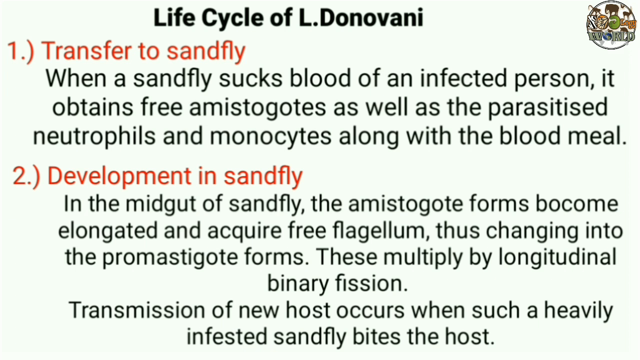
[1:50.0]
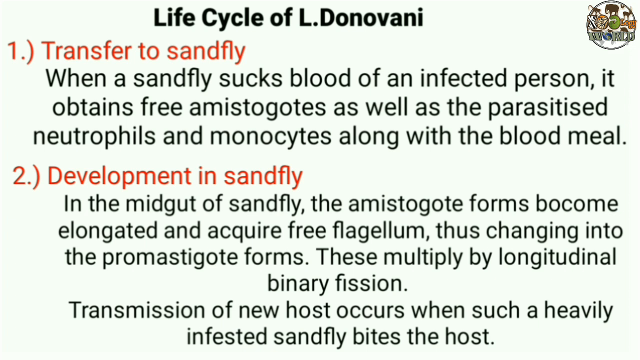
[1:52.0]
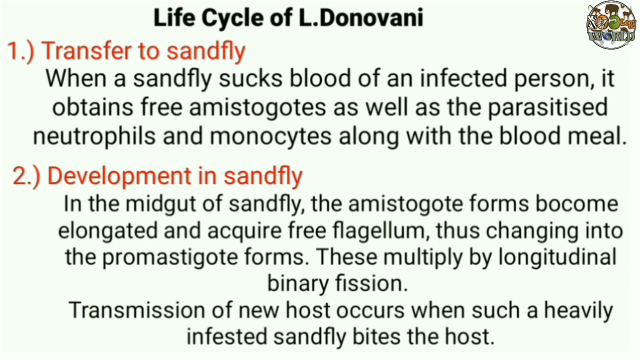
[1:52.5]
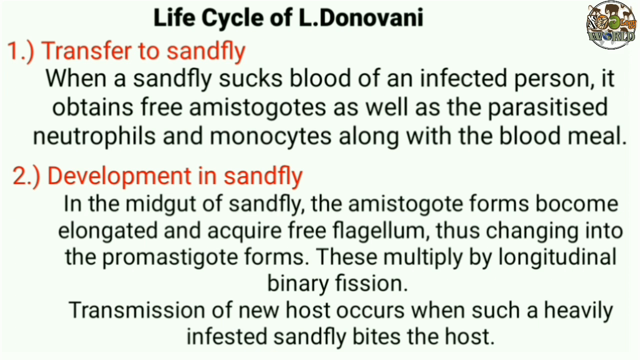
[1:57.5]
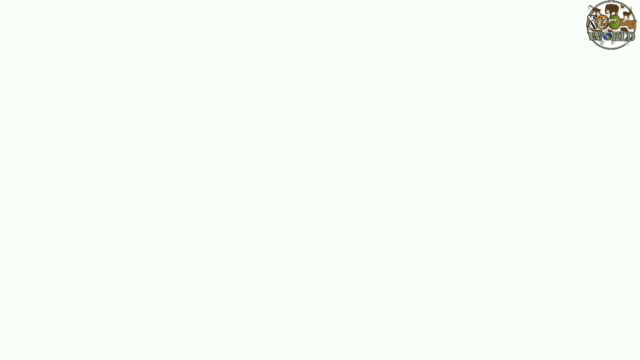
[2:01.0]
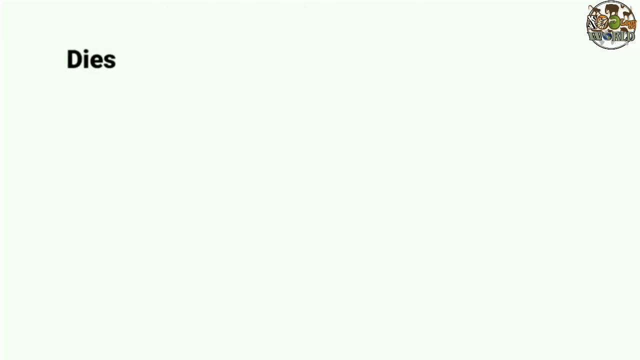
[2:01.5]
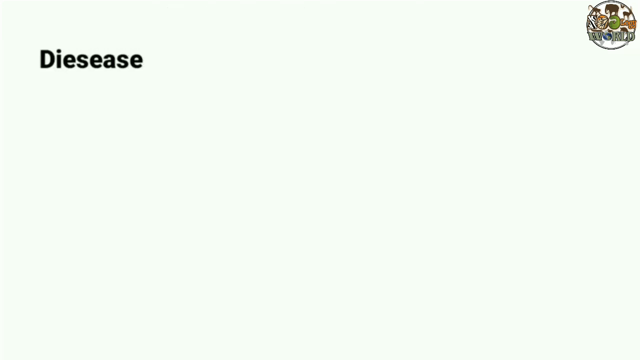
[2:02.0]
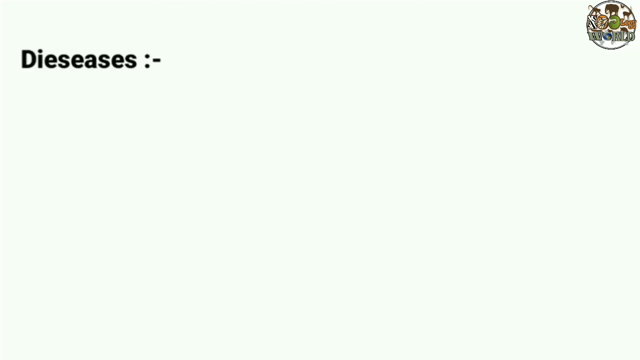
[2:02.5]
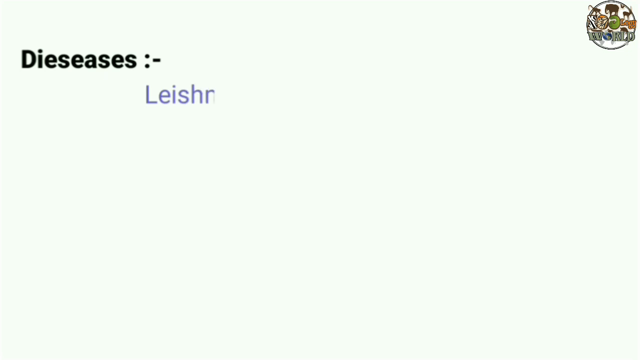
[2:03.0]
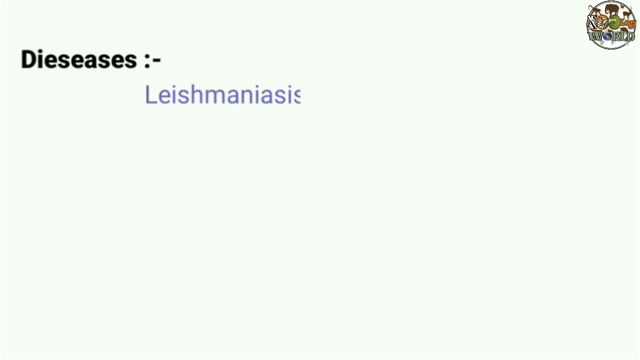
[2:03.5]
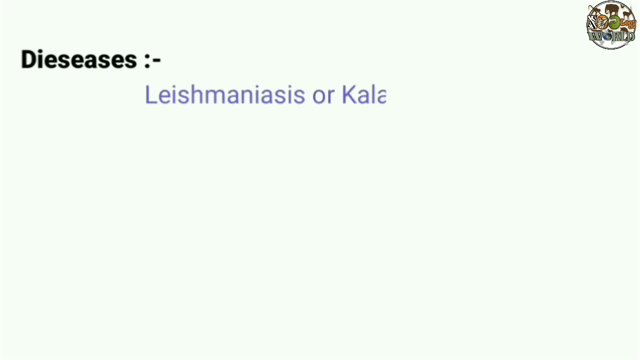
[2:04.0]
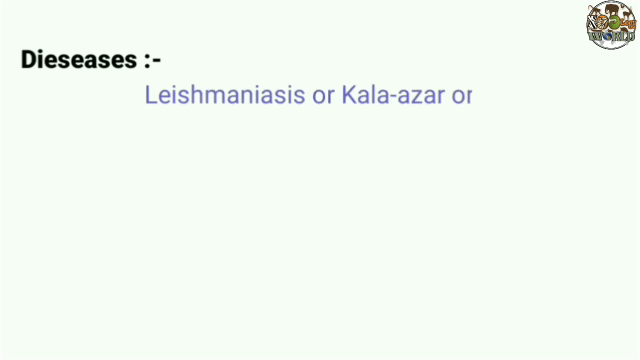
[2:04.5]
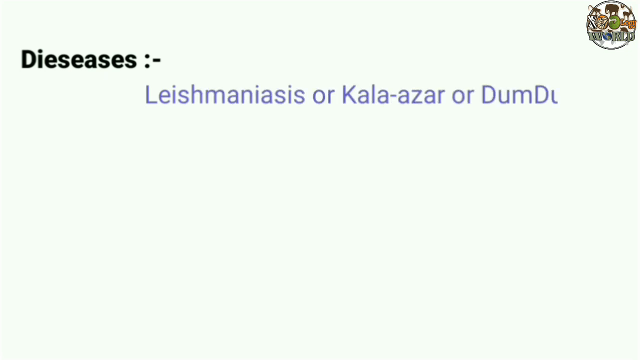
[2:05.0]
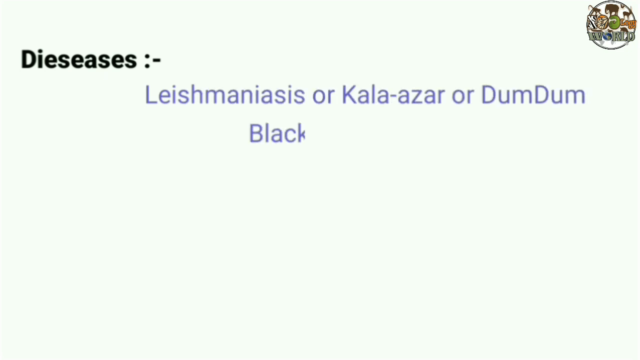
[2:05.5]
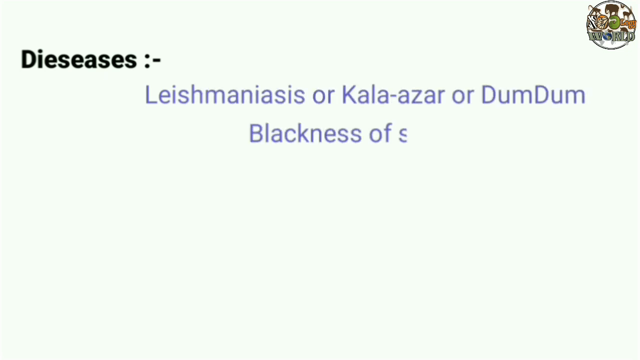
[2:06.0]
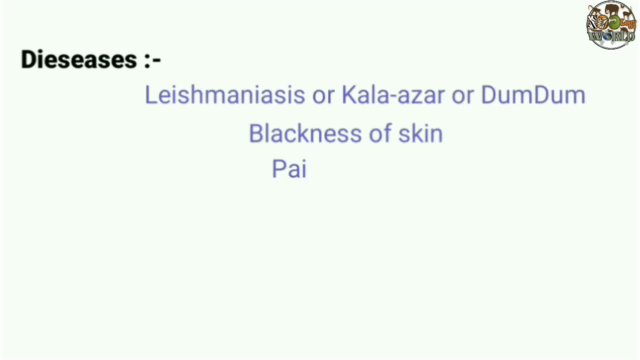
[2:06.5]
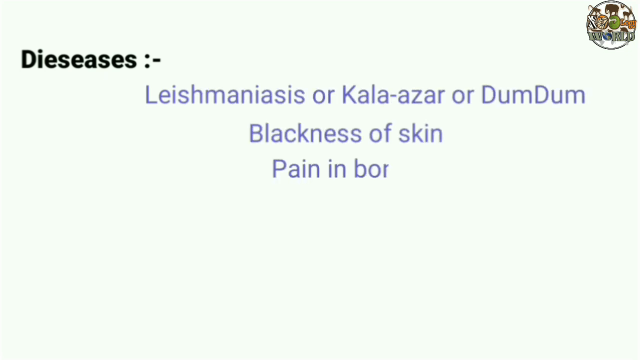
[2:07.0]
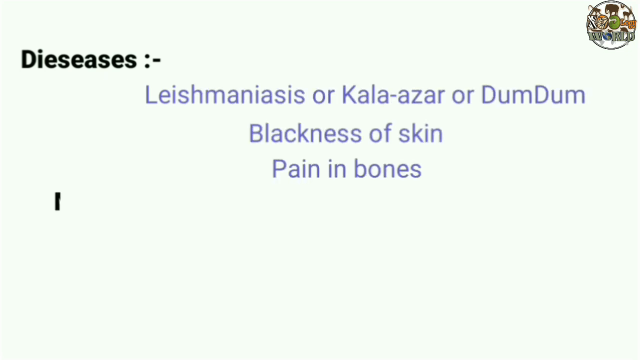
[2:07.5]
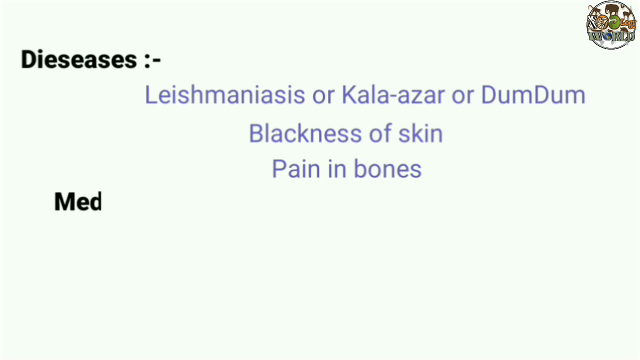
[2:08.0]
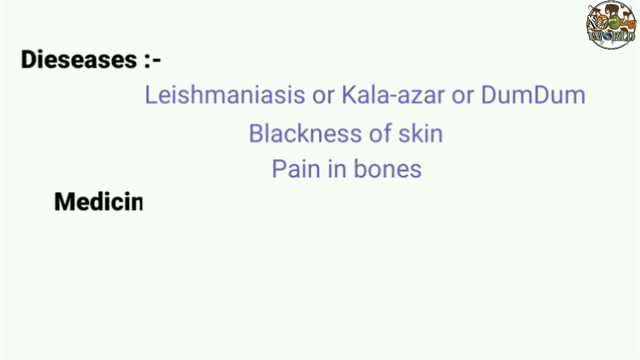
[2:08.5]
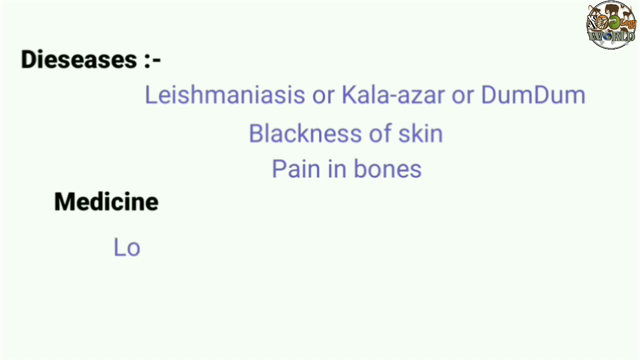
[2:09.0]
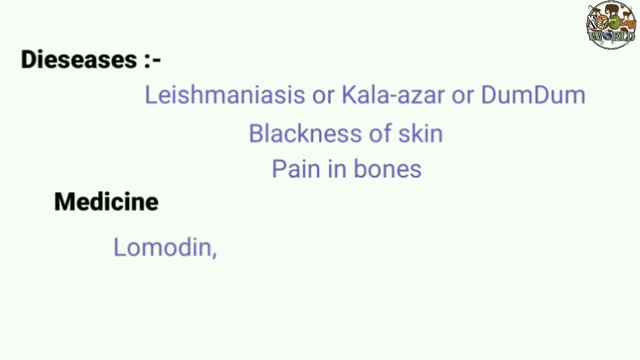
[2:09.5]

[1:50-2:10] On a white background with the Zoology World logo in the top right, the green title "Life Cycle of L Donovani" is at the top. Below it, in orange, is "Transfer to Sandfly," followed in green by "When a sandfly sucks blood of an infected person, it obtains free amistogotes, as well as the parasitised neutrophils and monocytes, along with the blood meal." Below that is a new subject in orange, "Development in Sandfly," followed by "In the midgut of sandfly, the amistogotes forms become elongated and acquire free flagellum, thus changing into promastigote forms. These multiply by longitudinal binary fission." Below that it reads "transmission of new host acquires from such a heavily infested sandfly bites the host." No action happens for a while, and finally the scene begins to transition but cuts off.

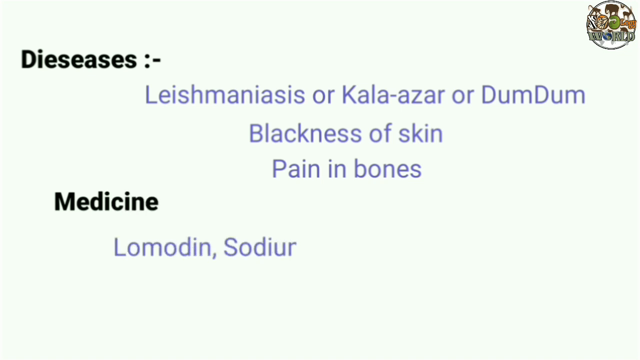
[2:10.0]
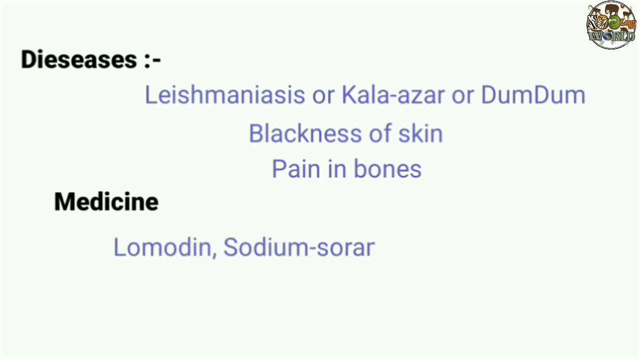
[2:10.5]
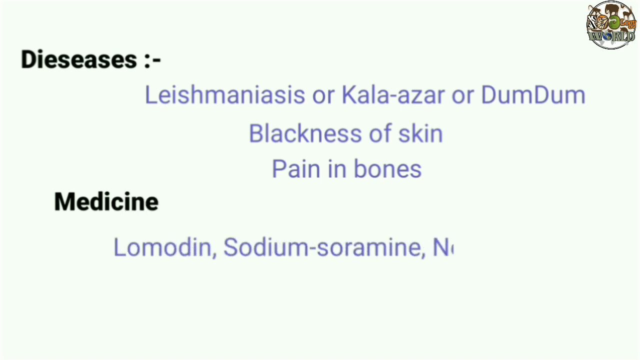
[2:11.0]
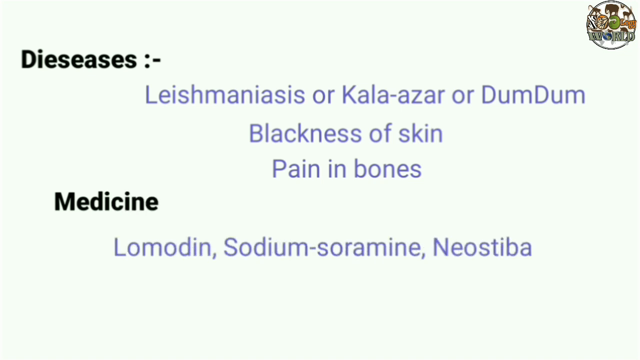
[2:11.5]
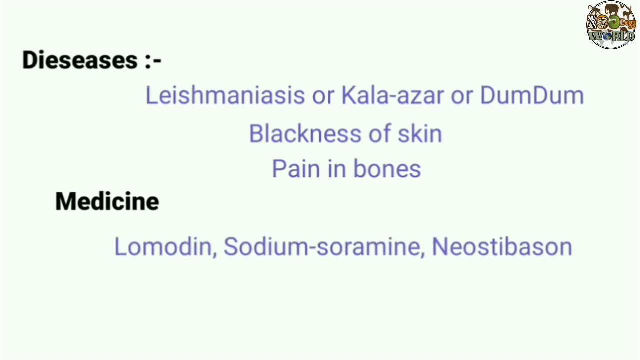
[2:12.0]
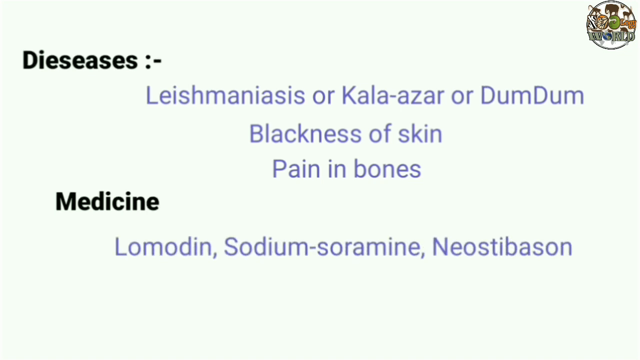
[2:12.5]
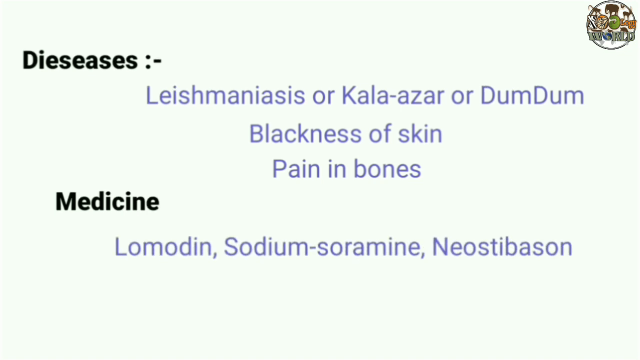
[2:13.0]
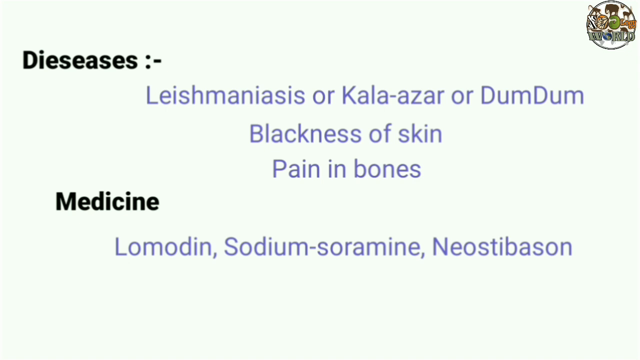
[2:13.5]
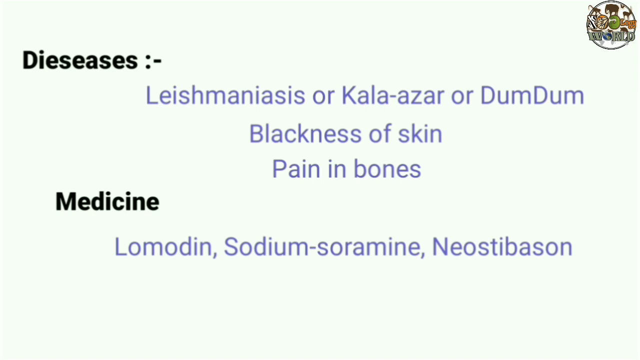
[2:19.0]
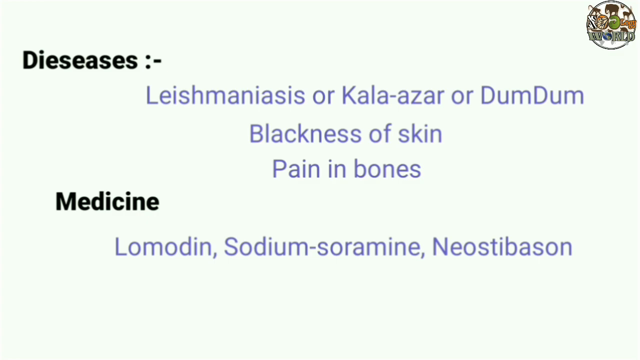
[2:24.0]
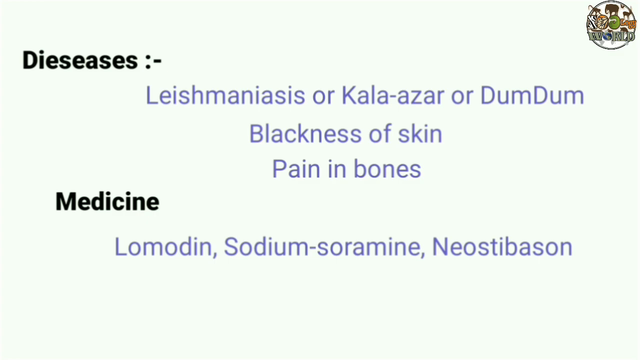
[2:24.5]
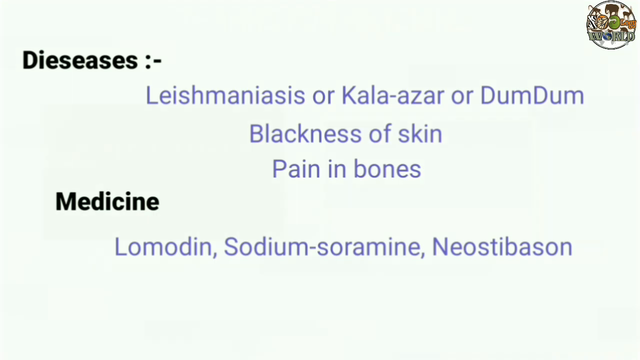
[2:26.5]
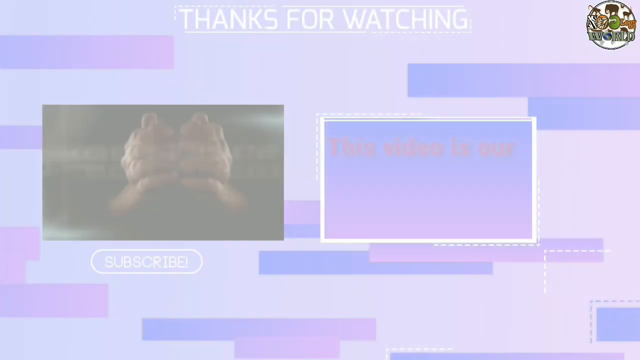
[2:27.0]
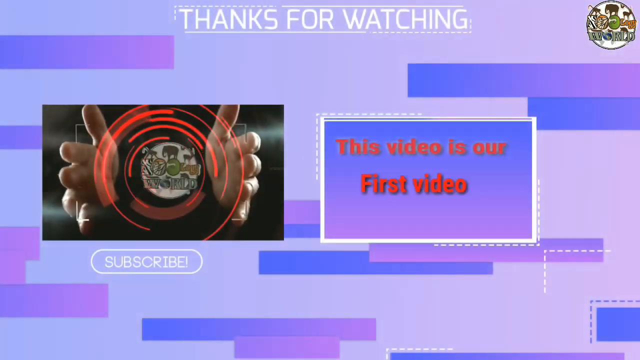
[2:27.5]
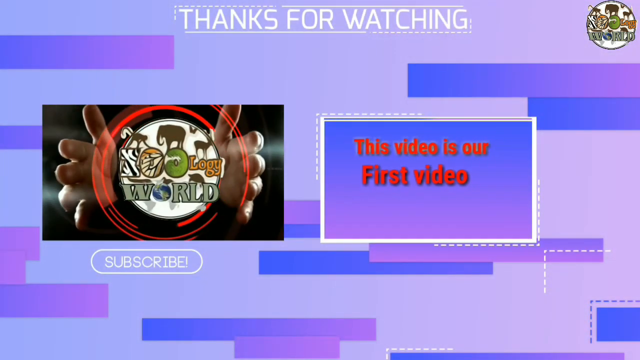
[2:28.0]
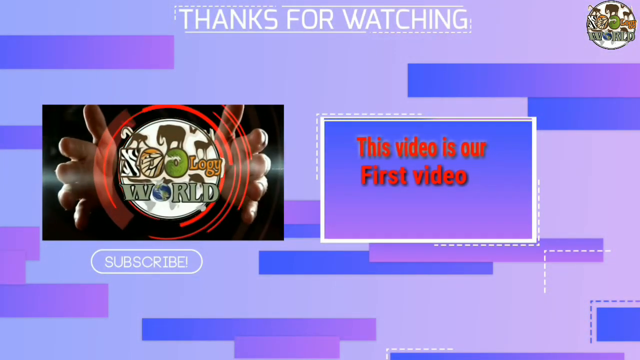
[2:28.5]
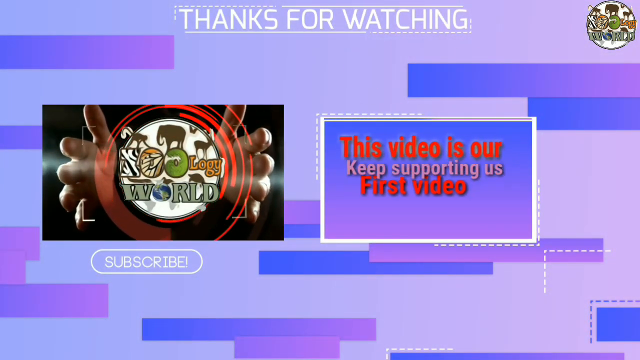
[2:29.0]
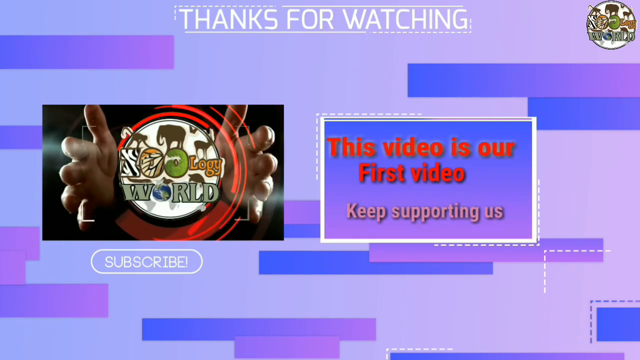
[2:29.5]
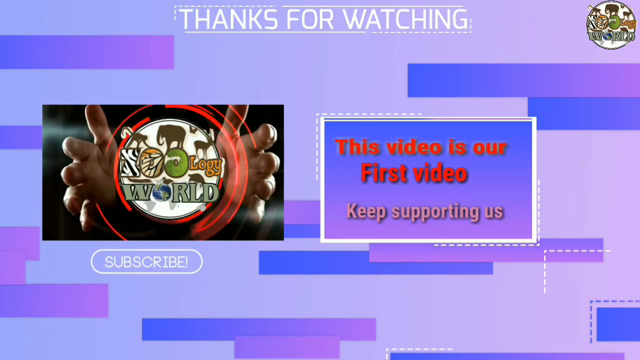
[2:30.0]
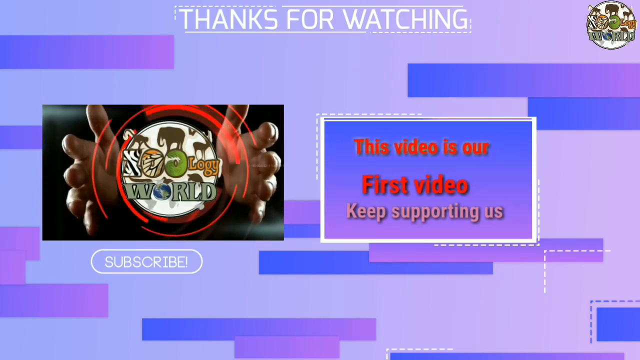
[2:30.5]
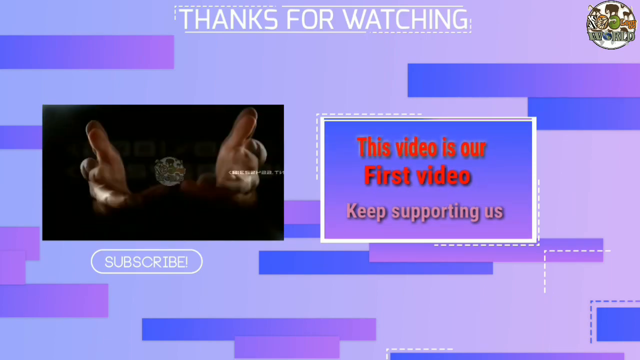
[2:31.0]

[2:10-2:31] On a white background, the Zoology World logo is in the top right, filled with animals and the earth. Words and sentences form from left to right. The first word, in green, is "diseases," and next to it, in blue, are the diseases it can cause. Two of the diseases are in a foreign language, the third is called "dum-dum," below that is "blackness of skin," and the last is "pain in bones." Below that, the word "medicine" appears in green, and below it, in blue, "lomodin, sodium soramine, and neostibason." No action occurs for a few seconds. The scene then transitions to a purple background. On the left side is a video of two hands with open palms on the left and right, with the Zoology World logo between them surrounded by a red ring, and the word "subscribe" below that video. In the video on the right, words pop in in red reading "this video is our first video." Then a new sentence drops down from the top in that video, reading "keep supporting us."